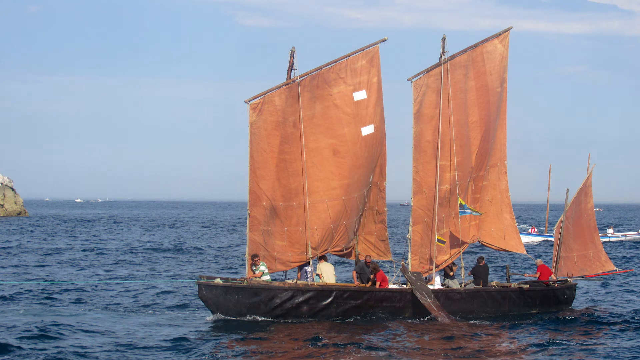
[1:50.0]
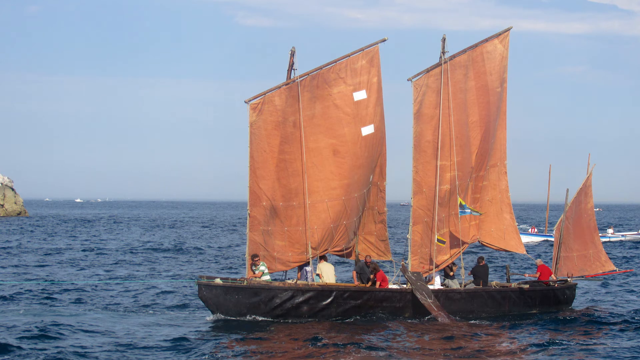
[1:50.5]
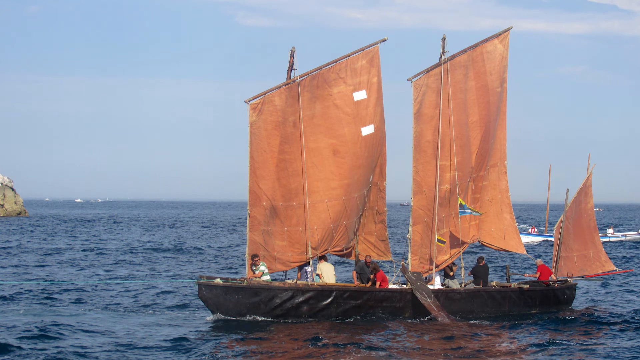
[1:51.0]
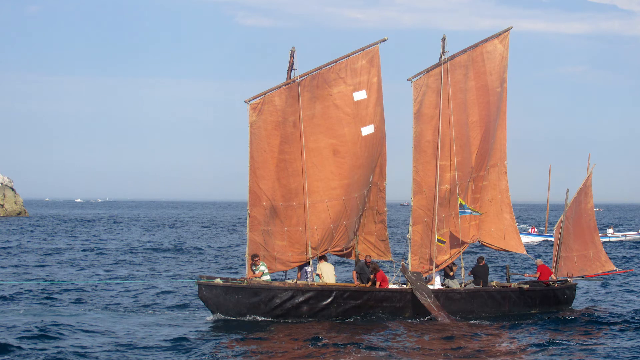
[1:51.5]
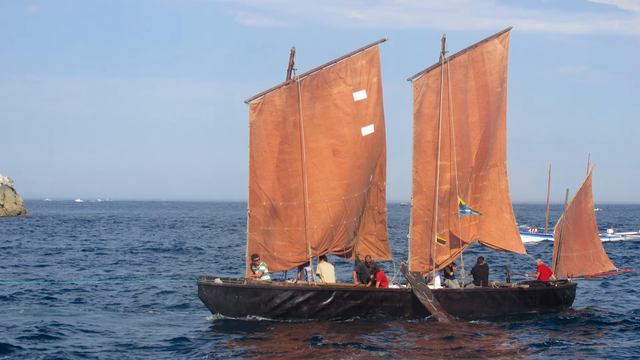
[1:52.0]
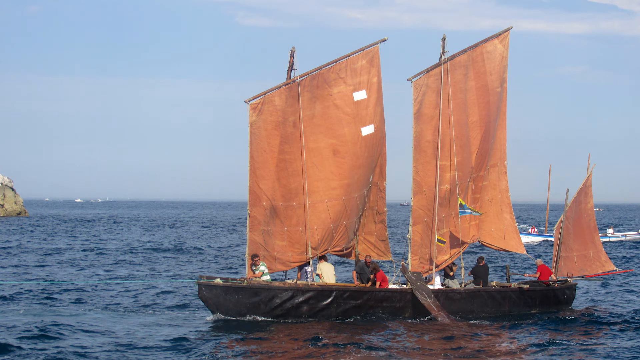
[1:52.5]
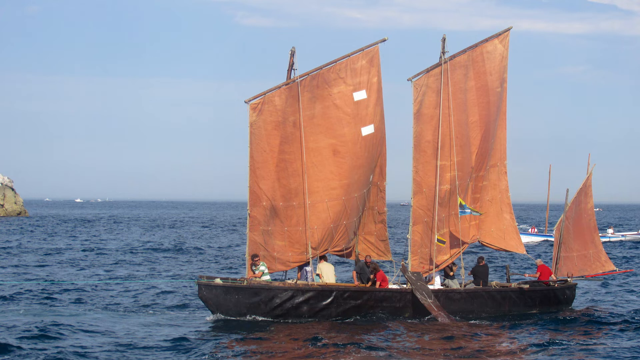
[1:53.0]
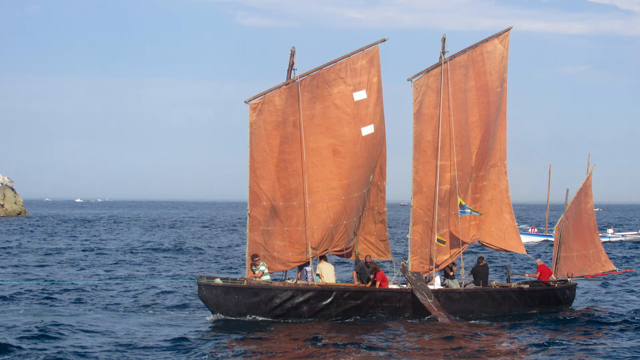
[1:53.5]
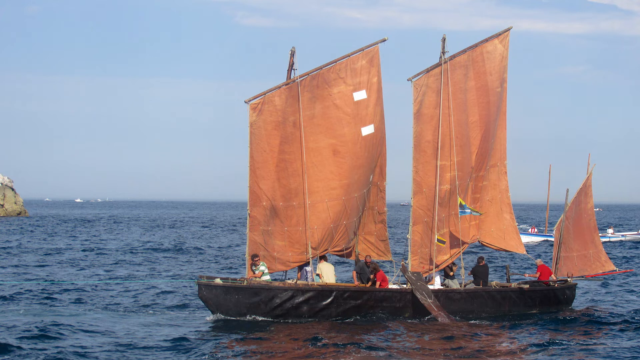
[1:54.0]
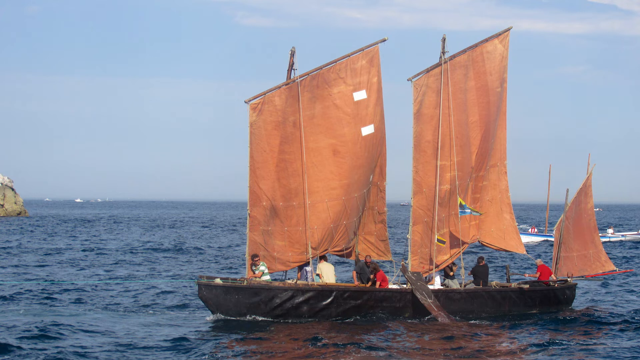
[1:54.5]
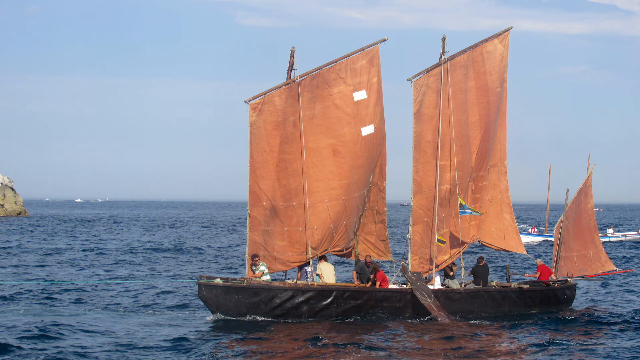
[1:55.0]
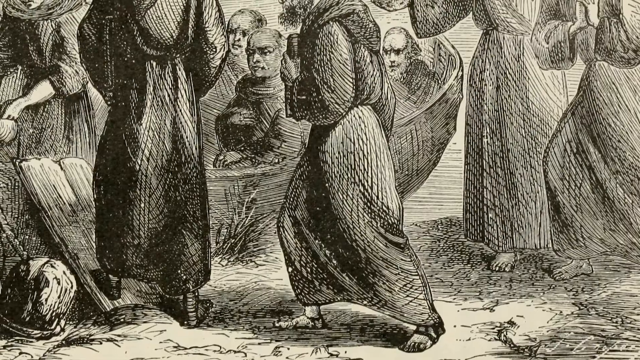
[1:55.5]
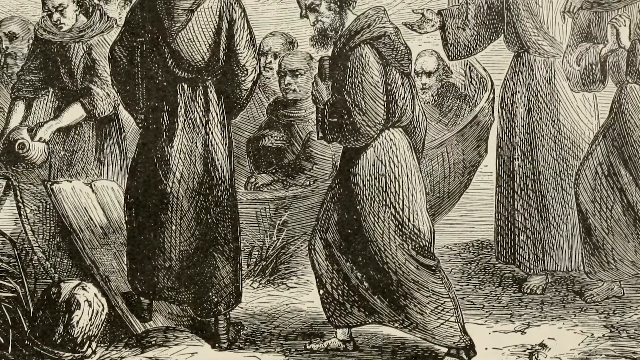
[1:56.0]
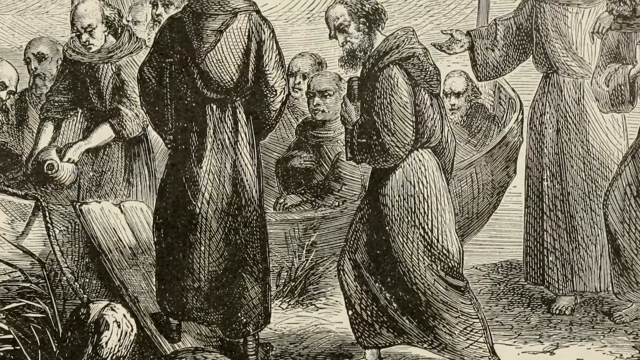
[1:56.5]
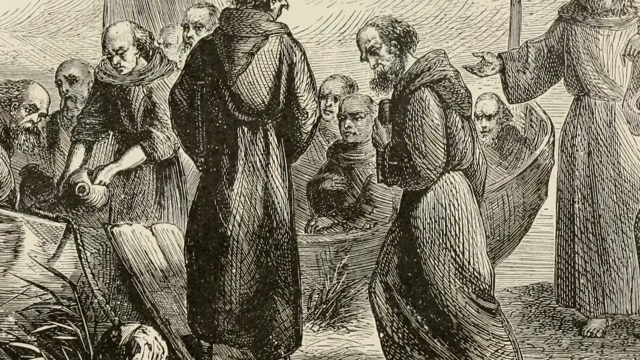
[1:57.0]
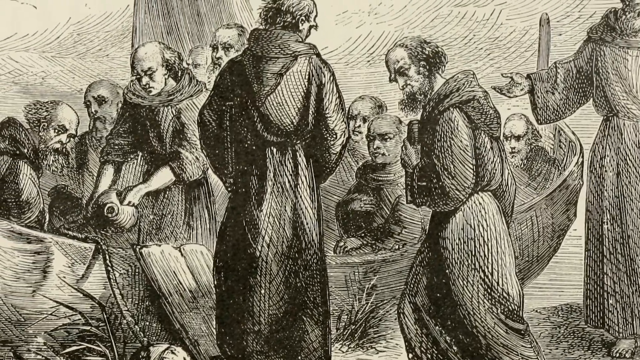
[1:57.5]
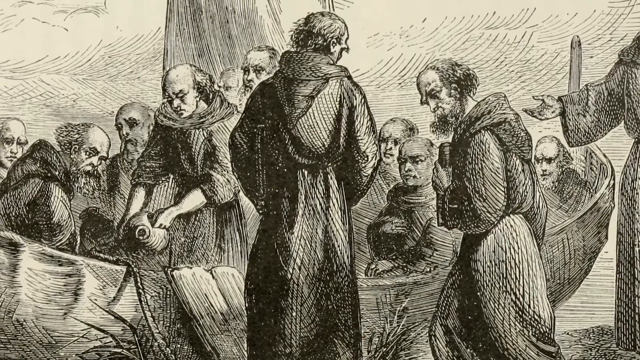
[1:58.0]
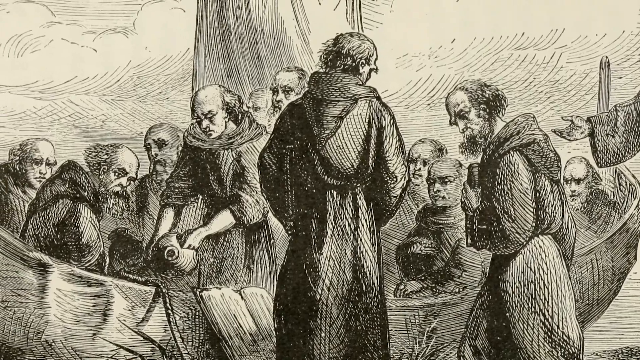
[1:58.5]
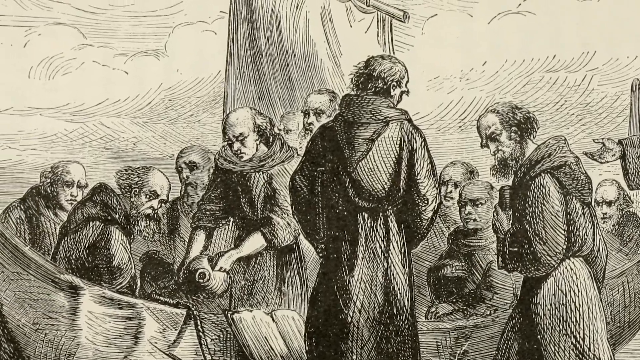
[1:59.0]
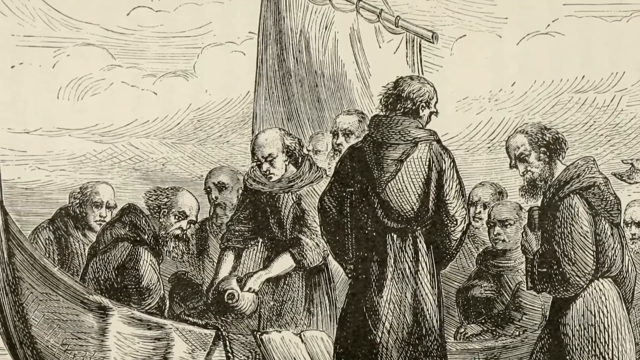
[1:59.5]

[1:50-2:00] A sailboat is on the water. It looks like an ancient sailboat with an ancient type of sails, but modern-day people are sailing it, so it seems to have been made to look like an old boat. In the distance behind them, a more modern boat moves along in the ocean. Next comes a drawing of a group of religious figures standing around outside a boat. The men are in robes and look like monks or religious figures, and about a dozen men are inside the boat. One of them is pouring liquid either off the side of the boat or onto its side; they appear to be christening the boat before it sets off to sail. A sail is raised in the middle of the boat.